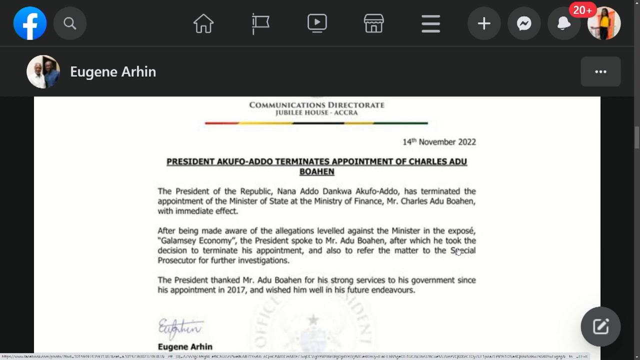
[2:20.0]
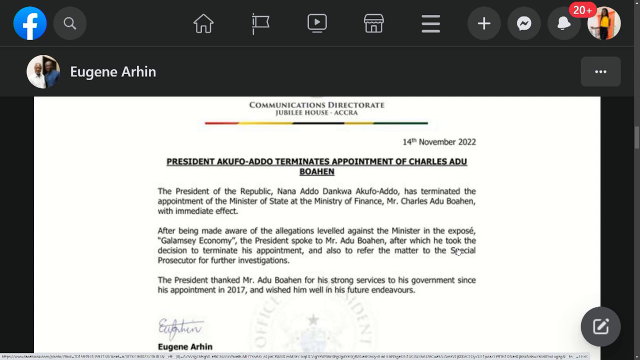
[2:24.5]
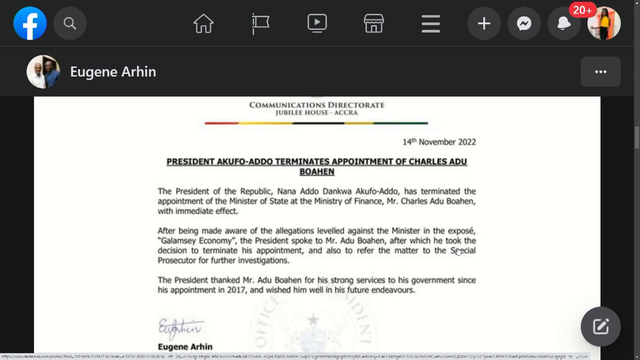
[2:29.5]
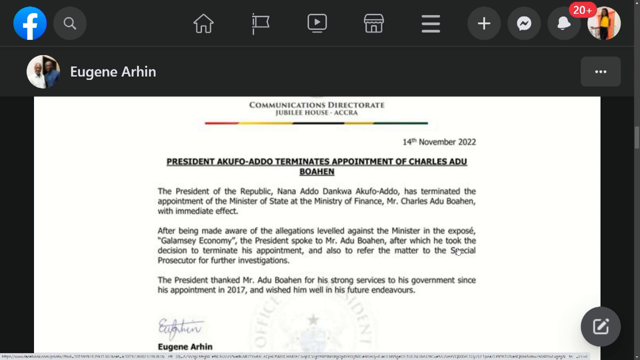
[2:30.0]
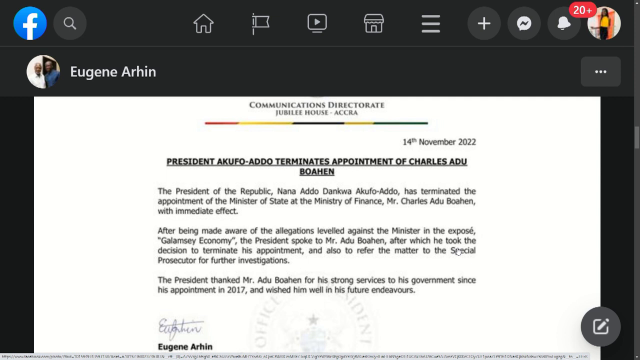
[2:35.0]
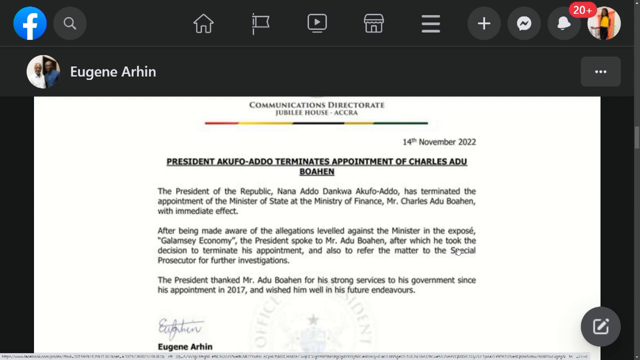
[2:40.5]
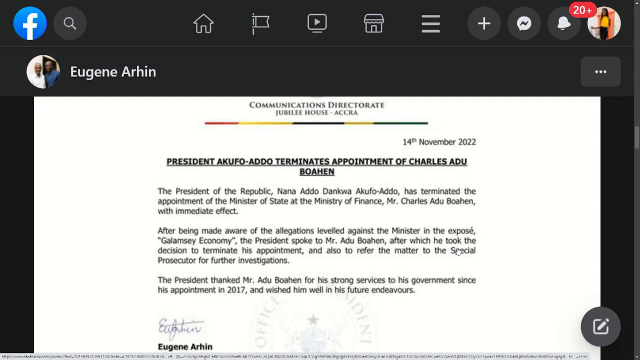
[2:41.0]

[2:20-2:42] The statement from the Communications Directorate, Jubilee House, Accra remains on screen as the Facebook post of Eugene Arhin. In the black bar at the top are white Facebook icons: a homepage, a flag, a video and a little house, plus three lines, a plus-sign icon to add a post, a messenger icon and a notification icon. In the top right-hand corner is a photograph of what looks to be a young woman in a yellow shirt and black skirt. The text reads: "President Akufo-Addo terminates appointment of Charles Adu-Boahen. The President of the Republic Nana Addo-Dankwa Akufo-Addo has terminated the appointment of the Minister of State at the Ministry of Finance, Mr. Charles Adu-Boahen, with immediate effect. After being made aware of the allegations leveled against the minister in the expose, Galamsey Economy, the President spoke to Mr. Adu-Boahen after which he took the decision to terminate his appointment and also to refer the matter to the Special Prosecutor for further investigations. The President thanked Mr. Adu-Boahen for his strong services to his government since his appointment in 2017 and wished him well in his future endeavors."